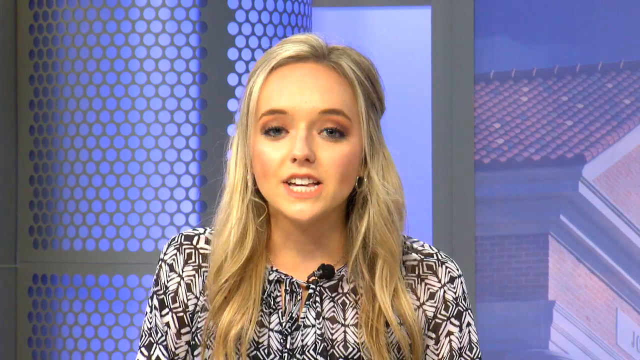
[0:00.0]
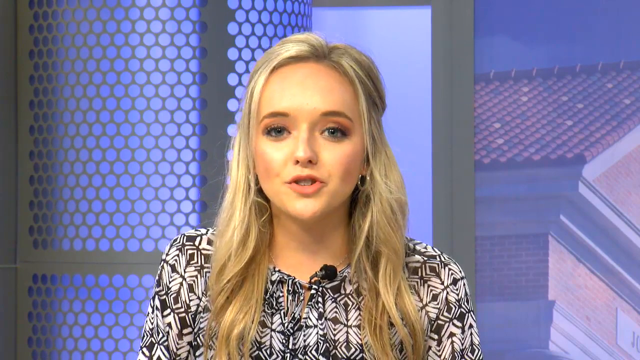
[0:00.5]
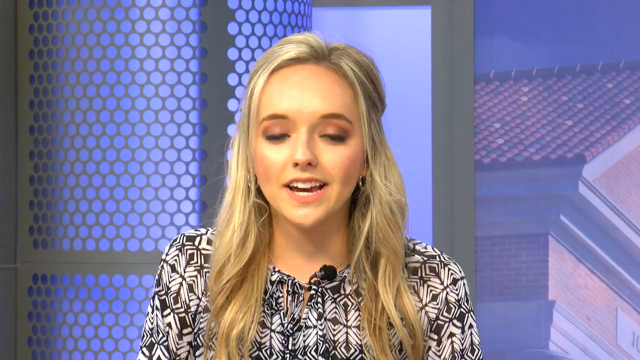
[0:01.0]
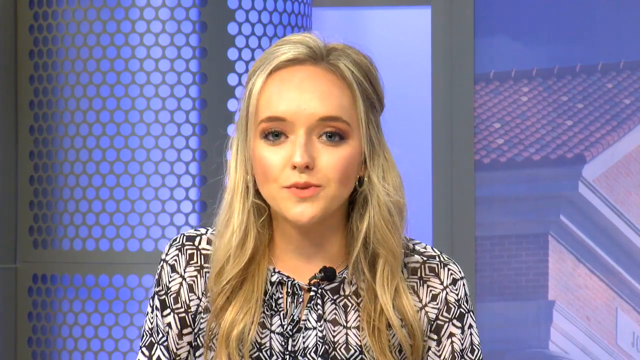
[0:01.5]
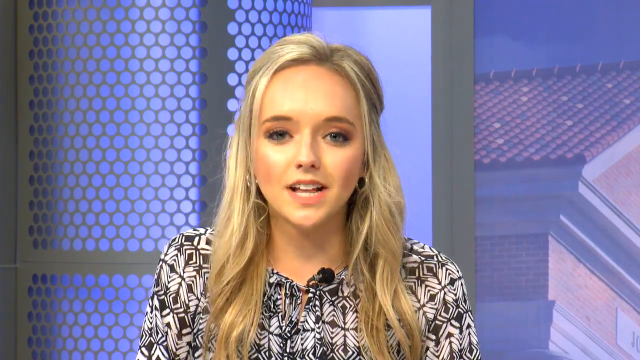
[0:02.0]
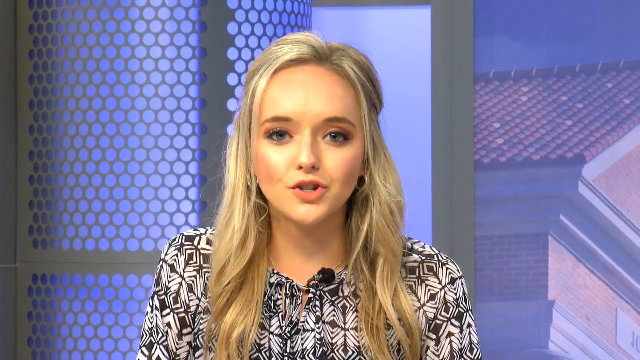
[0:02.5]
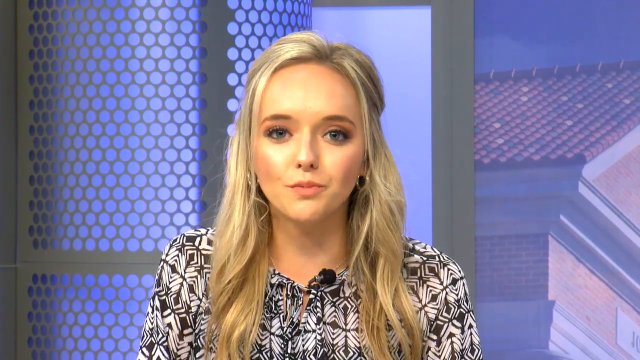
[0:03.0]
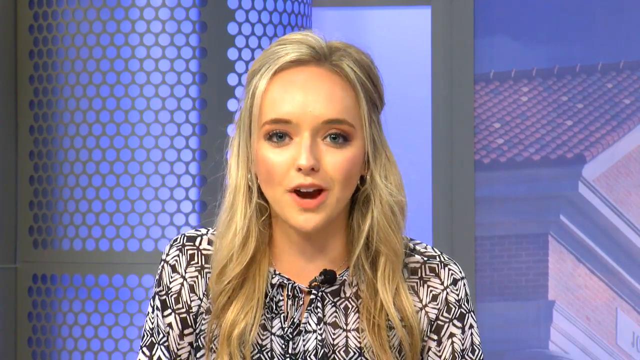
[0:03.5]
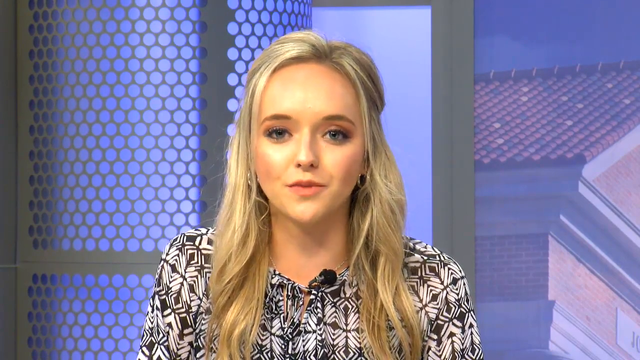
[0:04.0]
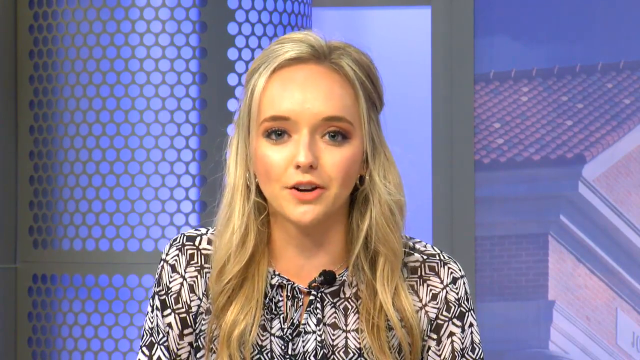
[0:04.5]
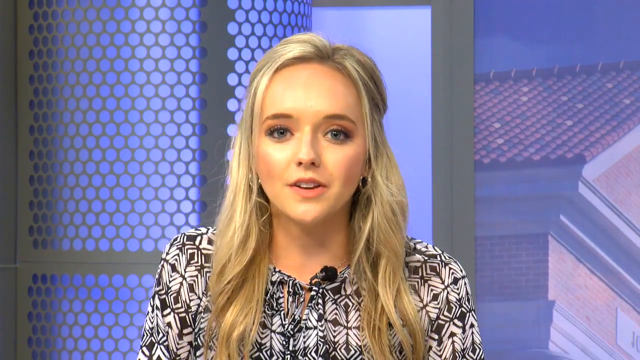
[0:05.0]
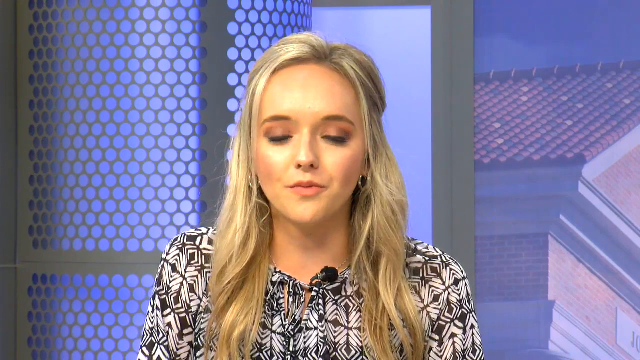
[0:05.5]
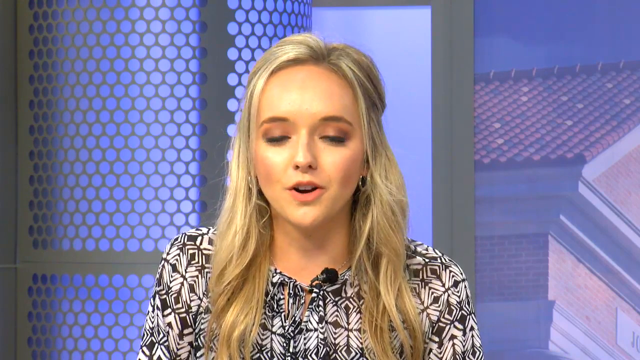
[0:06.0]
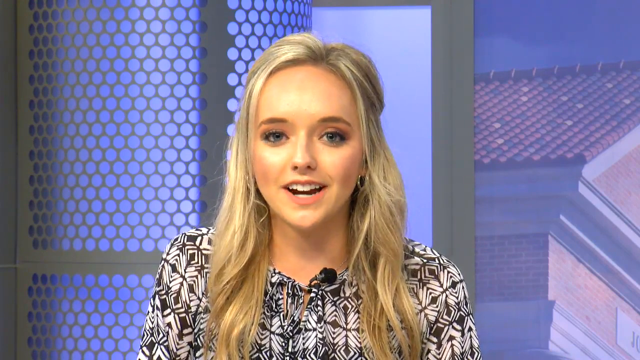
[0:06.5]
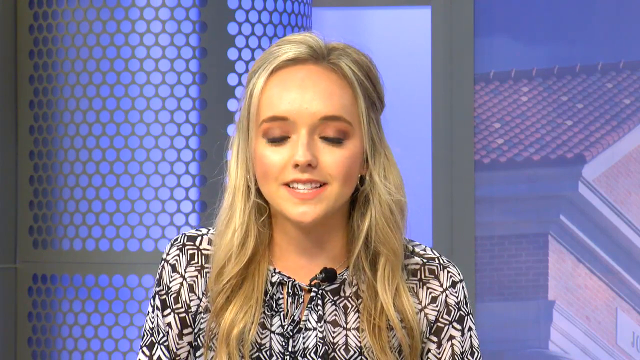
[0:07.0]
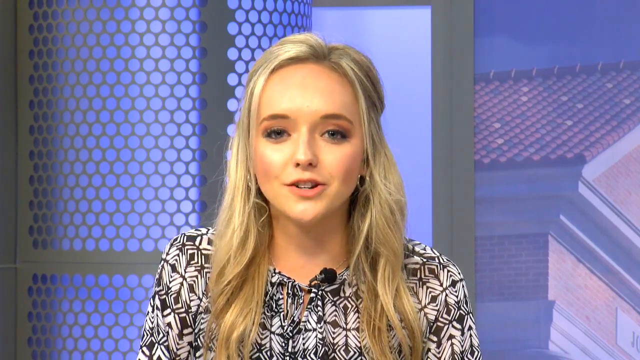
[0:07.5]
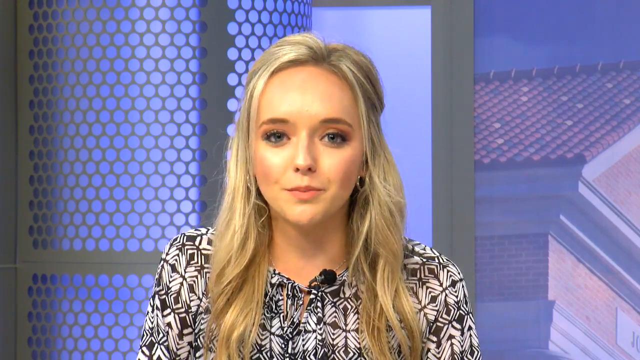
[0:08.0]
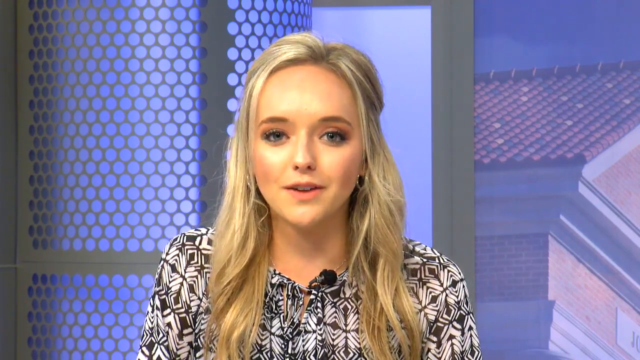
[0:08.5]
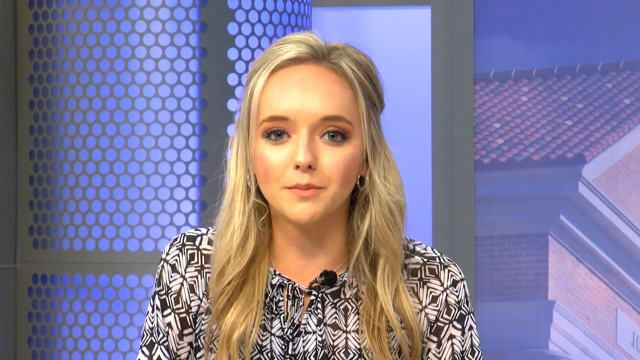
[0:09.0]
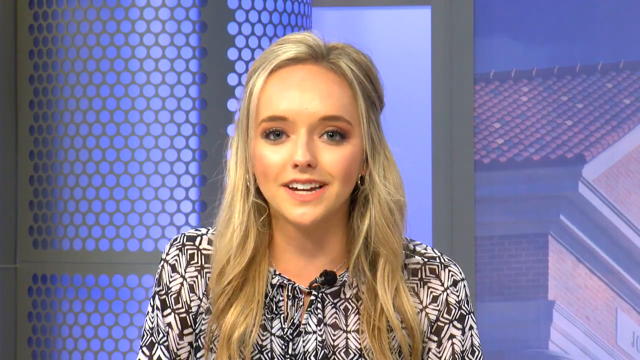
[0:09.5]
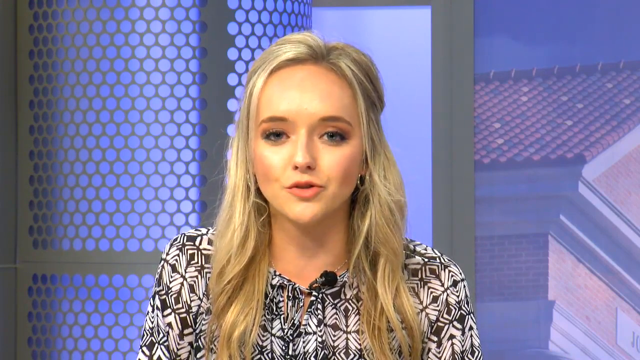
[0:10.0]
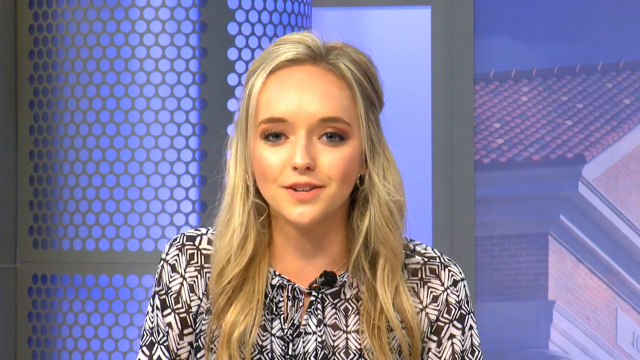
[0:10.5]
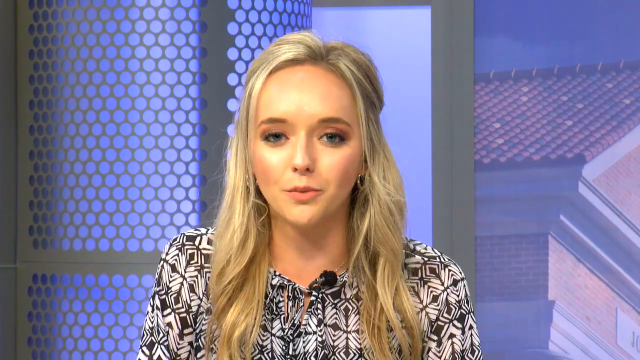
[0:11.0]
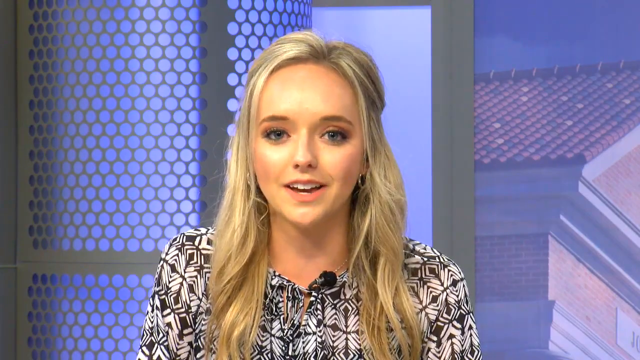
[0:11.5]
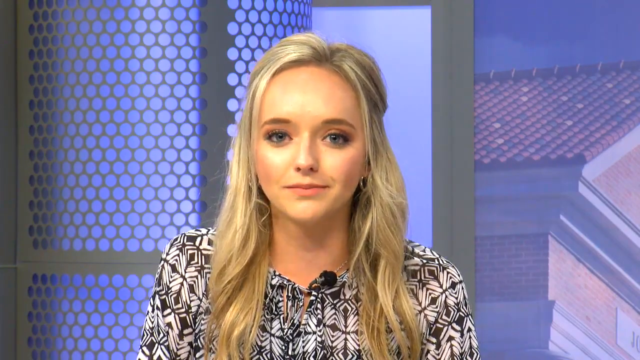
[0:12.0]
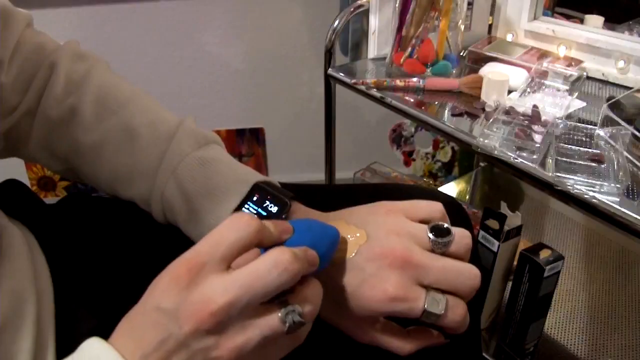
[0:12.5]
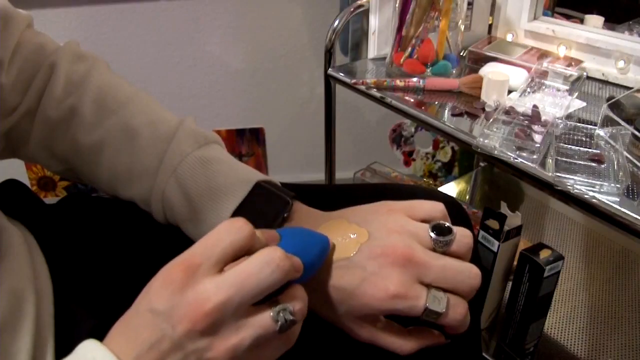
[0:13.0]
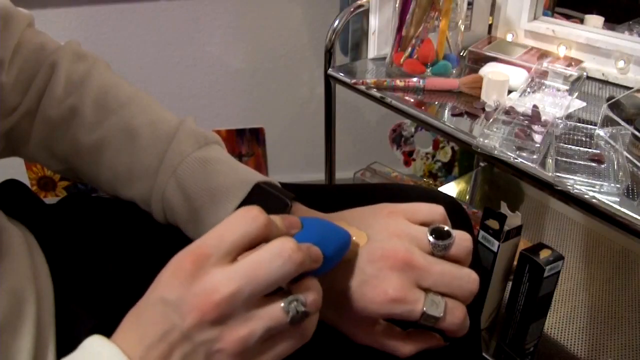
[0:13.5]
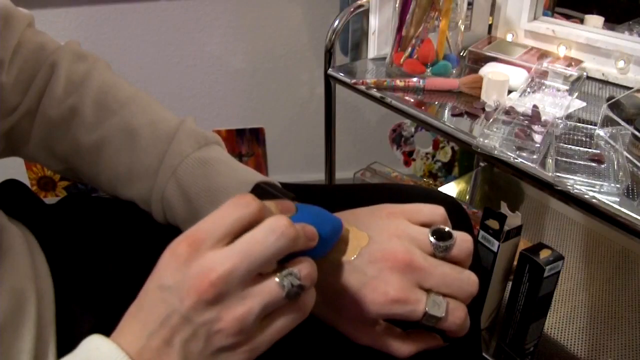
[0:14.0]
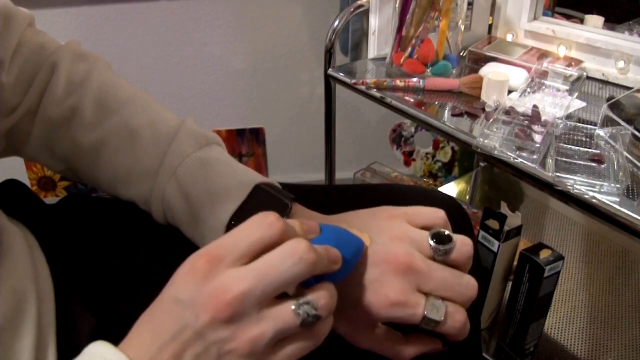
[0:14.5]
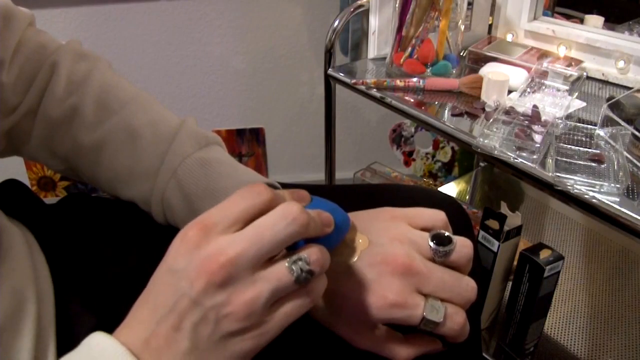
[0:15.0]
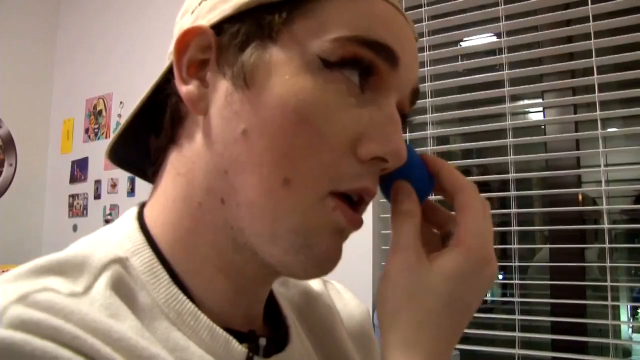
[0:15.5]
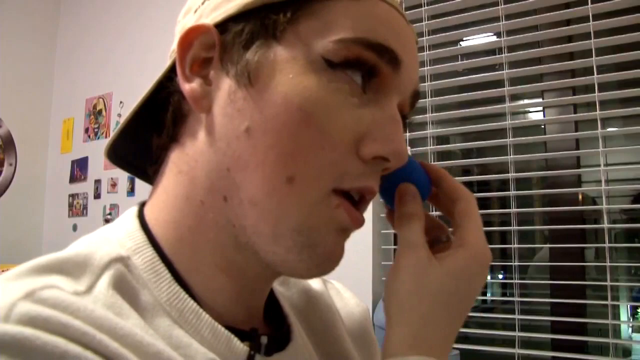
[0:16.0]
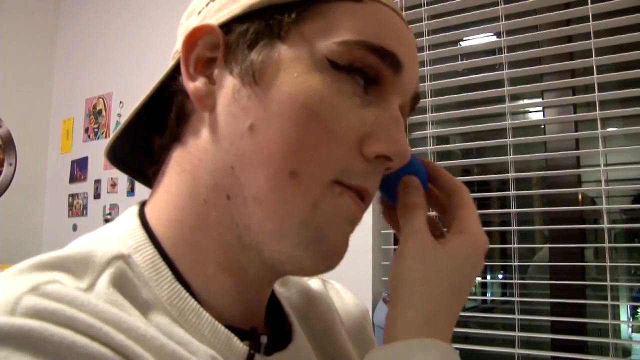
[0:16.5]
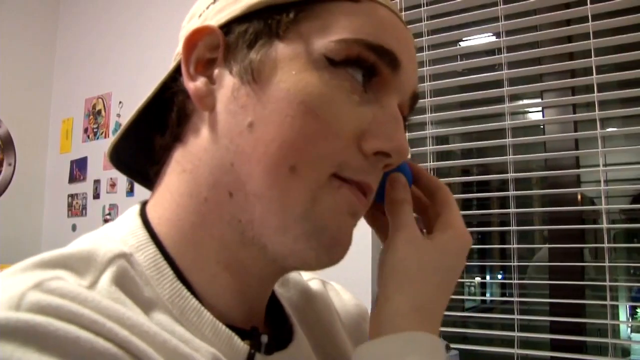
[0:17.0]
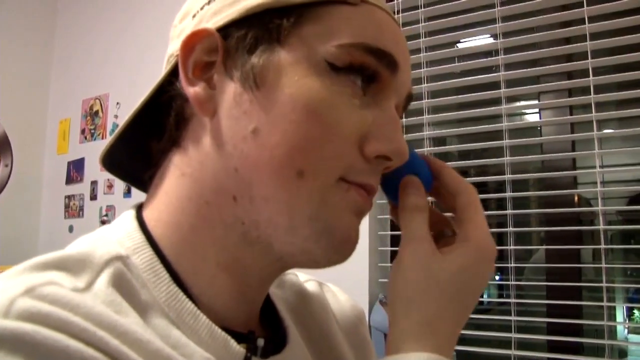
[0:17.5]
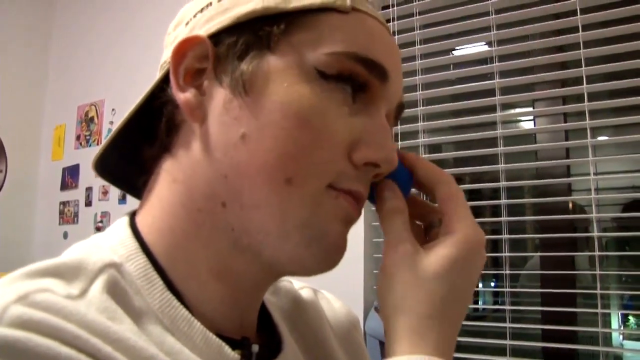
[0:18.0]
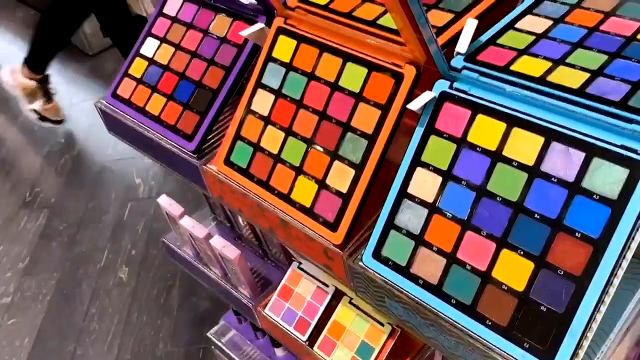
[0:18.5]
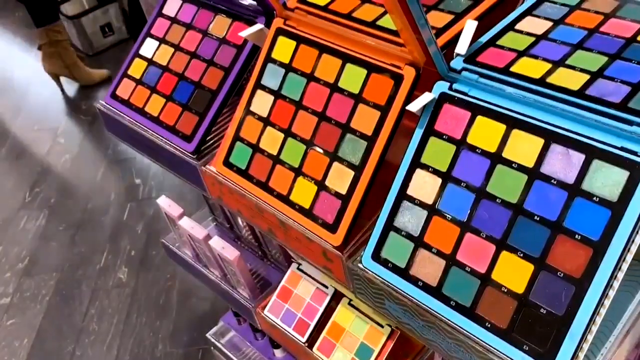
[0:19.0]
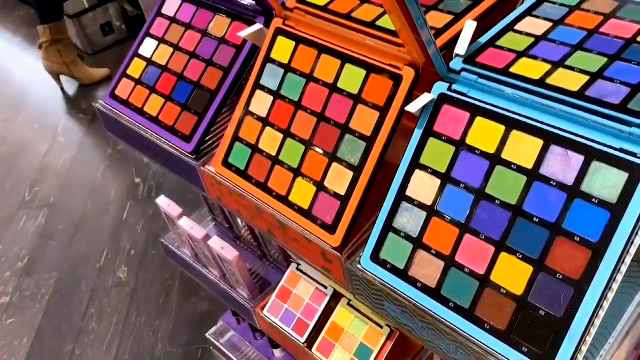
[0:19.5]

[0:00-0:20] A blonde woman in a shirt with a black and white jacket design, a news anchor, talks to the camera. The background has many shades of purple, with a building on the right-hand side and a circular silver design of some kind on the wall to the left. She keeps a fairly neutral expression as she talks, becoming a little more smiley, and she does not gesture or move her head much. The video then cuts to a close-up of someone's left hand, which has a ring on the ring finger. Makeup supplies are visible in the background on a silver shelf. The person holds a blue sponge in their right hand and taps foundation that is on the back of their left hand. The view then moves to the person's face as they apply the foundation to it. They wear a baseball cap backwards and have quite heavy eyeliner.